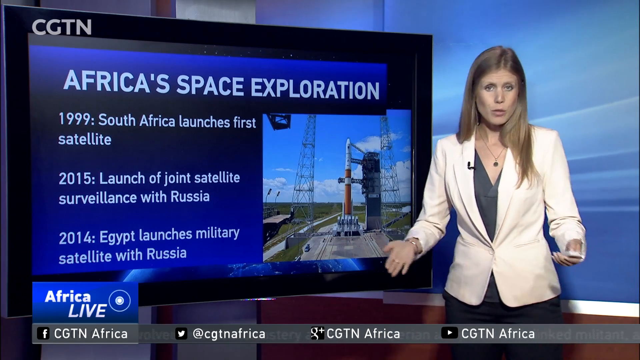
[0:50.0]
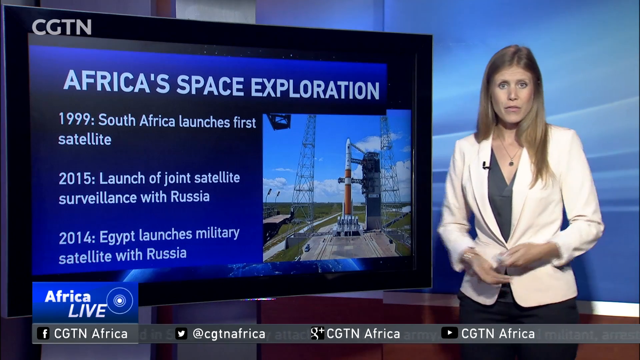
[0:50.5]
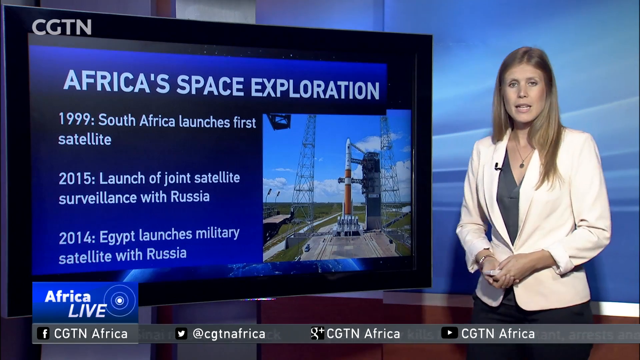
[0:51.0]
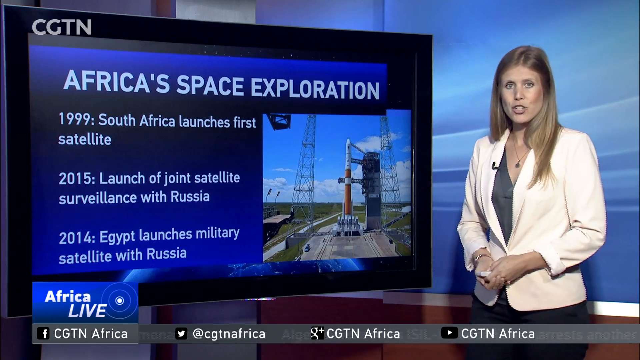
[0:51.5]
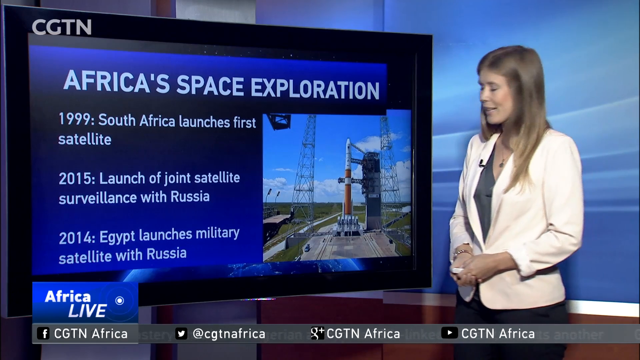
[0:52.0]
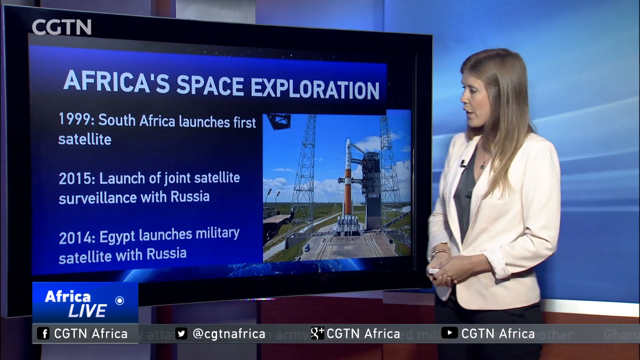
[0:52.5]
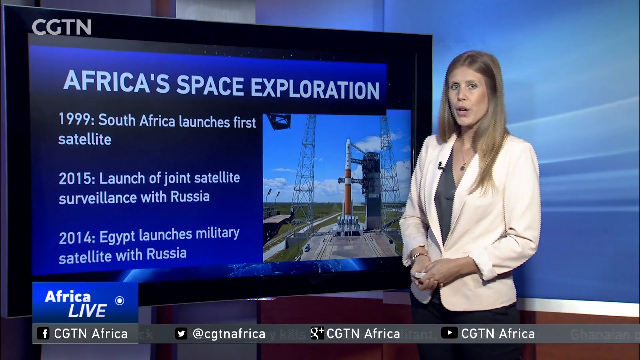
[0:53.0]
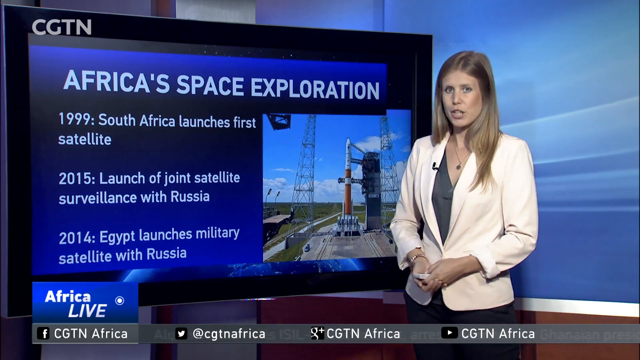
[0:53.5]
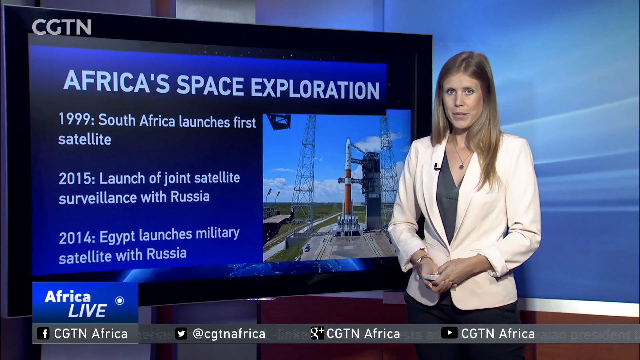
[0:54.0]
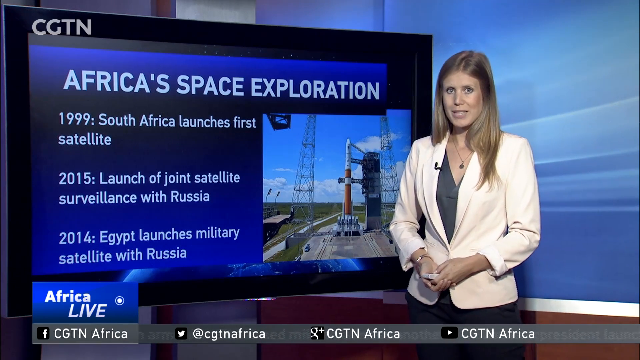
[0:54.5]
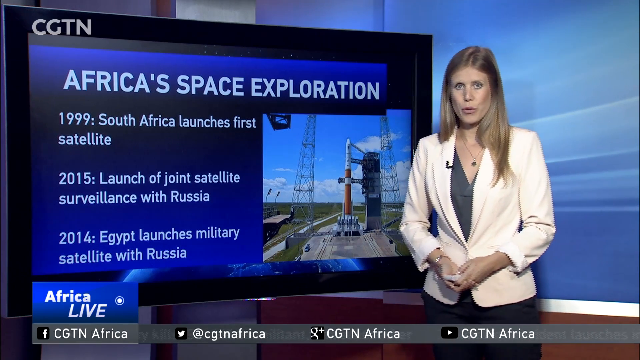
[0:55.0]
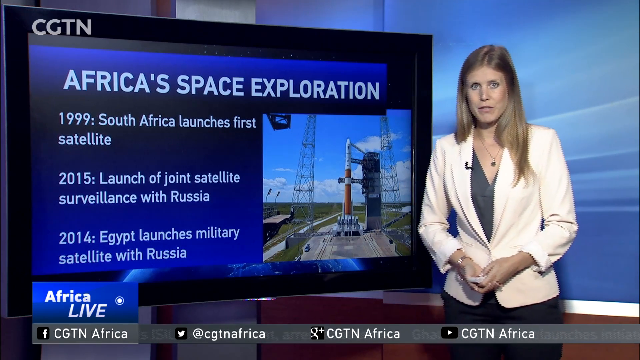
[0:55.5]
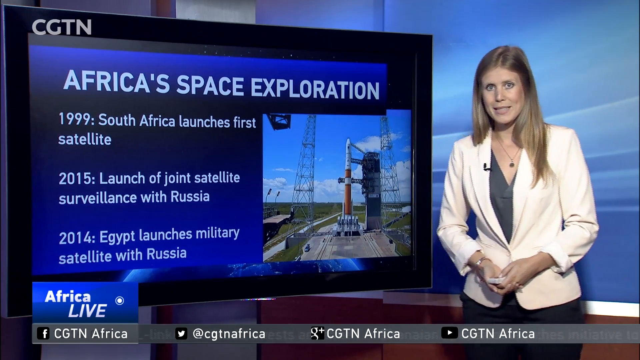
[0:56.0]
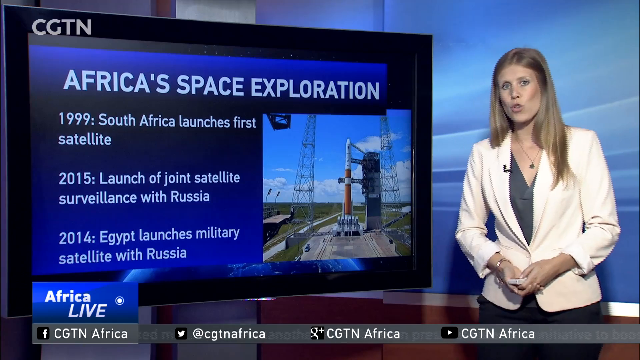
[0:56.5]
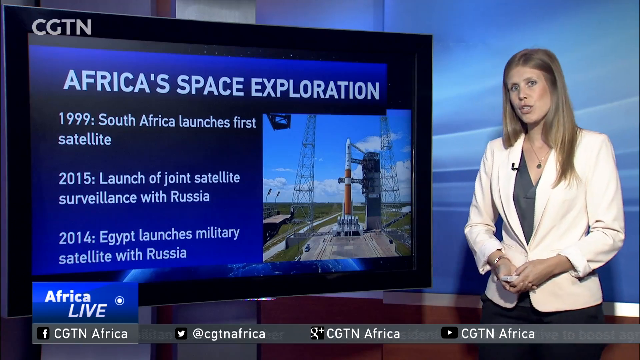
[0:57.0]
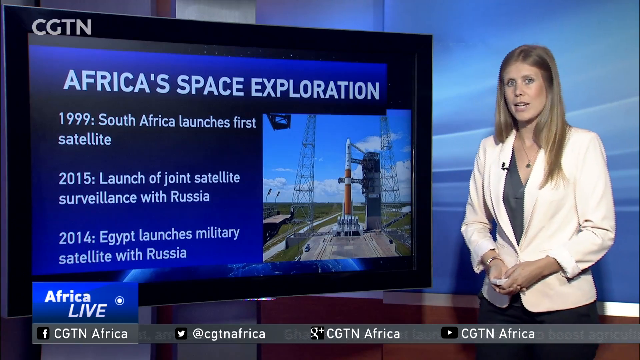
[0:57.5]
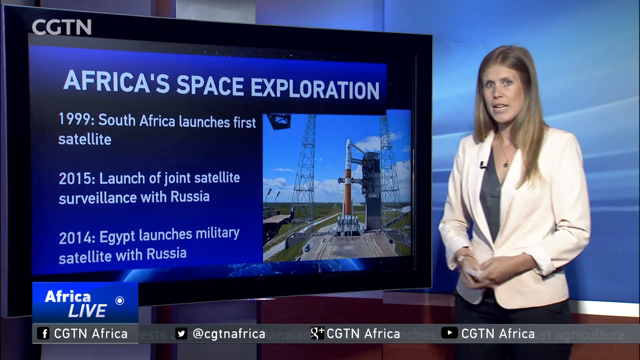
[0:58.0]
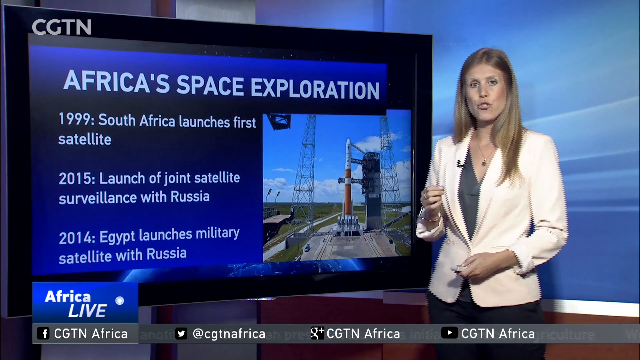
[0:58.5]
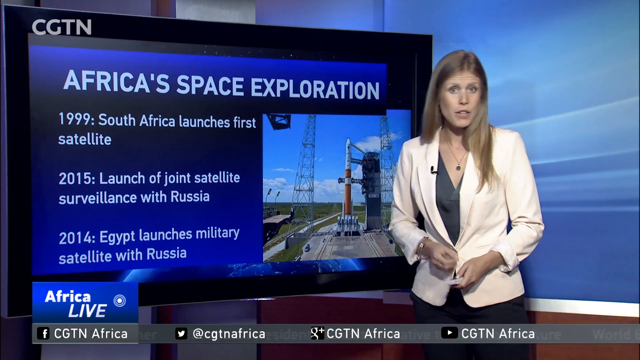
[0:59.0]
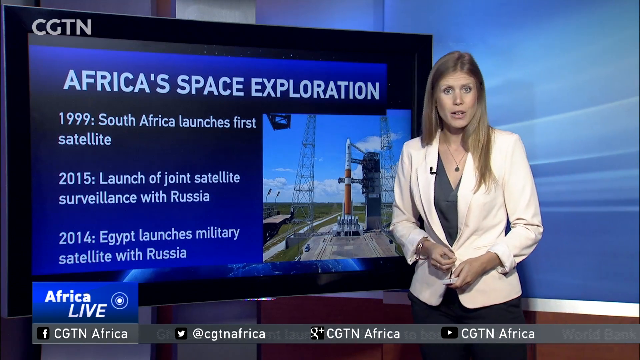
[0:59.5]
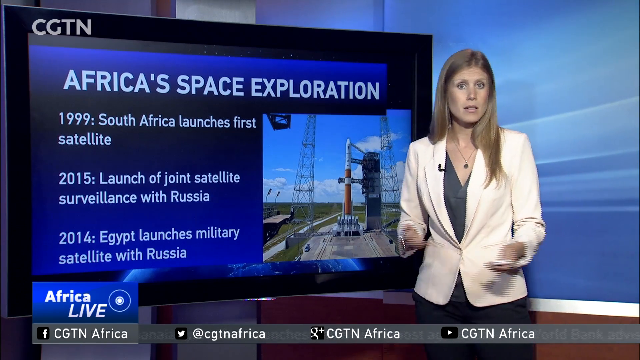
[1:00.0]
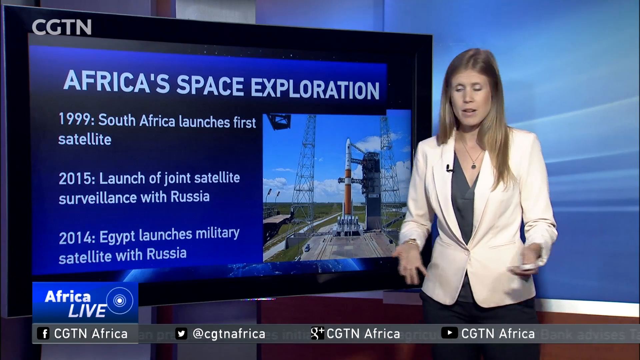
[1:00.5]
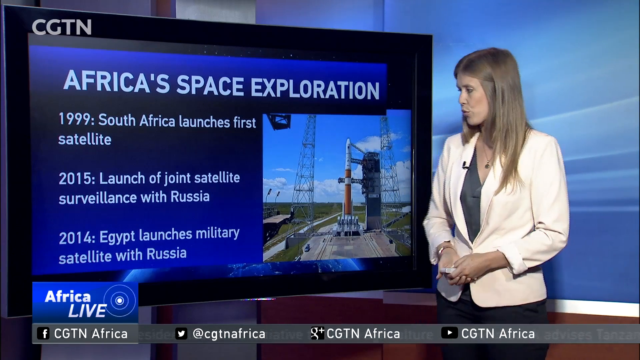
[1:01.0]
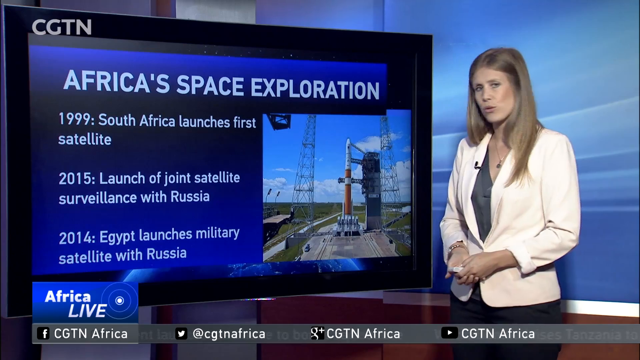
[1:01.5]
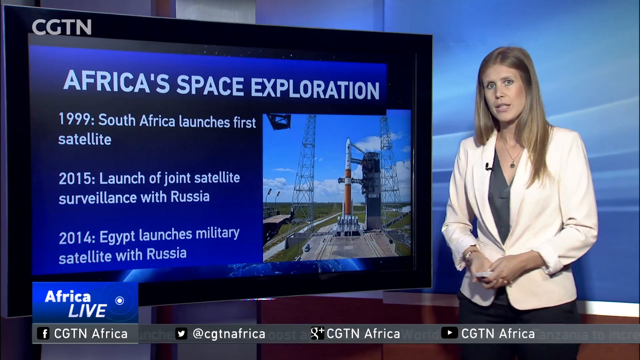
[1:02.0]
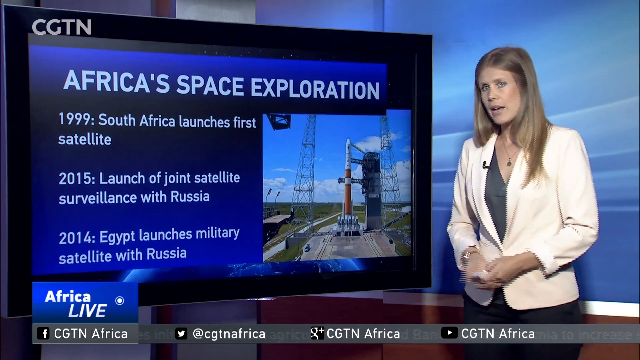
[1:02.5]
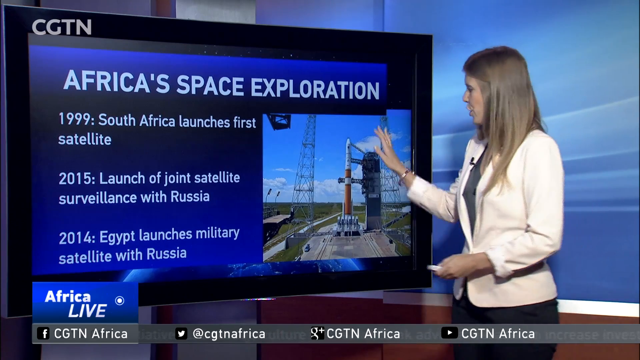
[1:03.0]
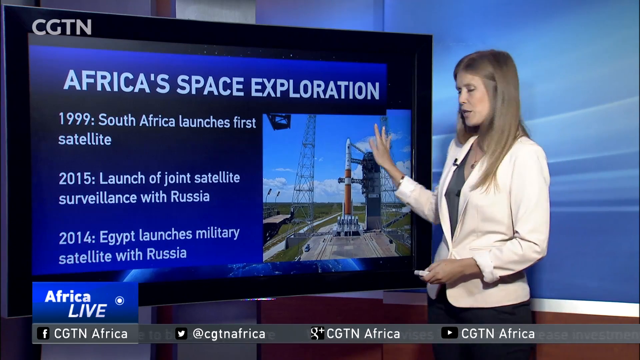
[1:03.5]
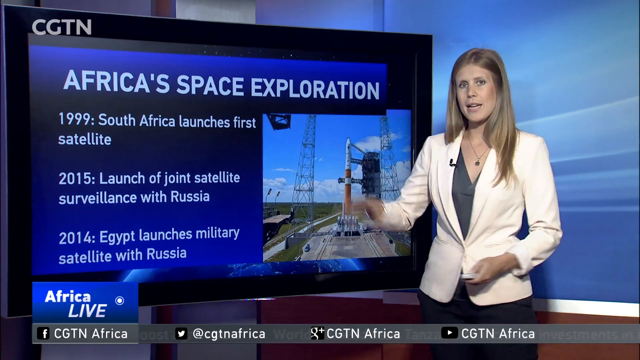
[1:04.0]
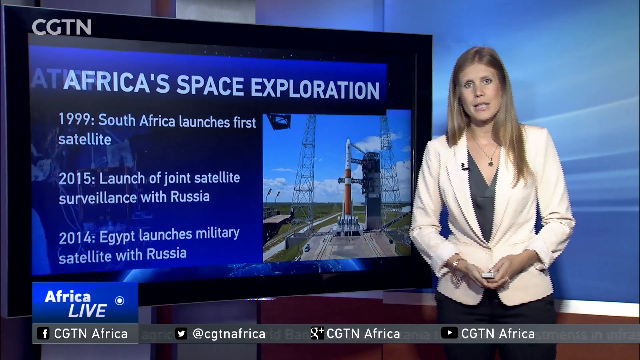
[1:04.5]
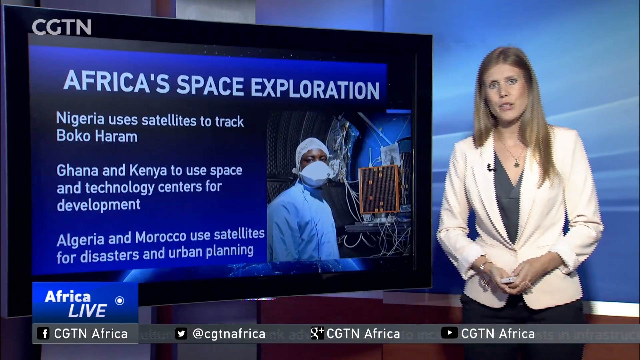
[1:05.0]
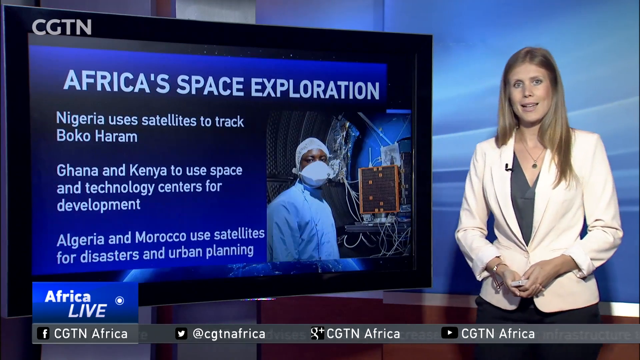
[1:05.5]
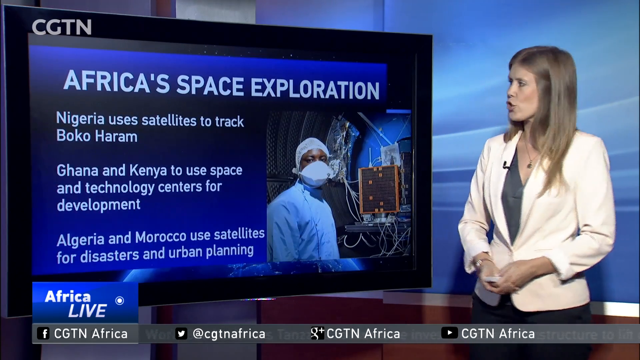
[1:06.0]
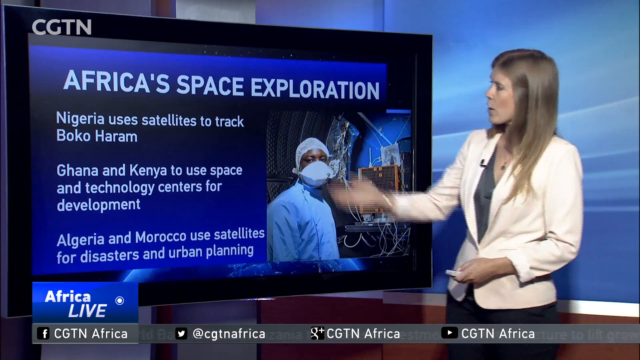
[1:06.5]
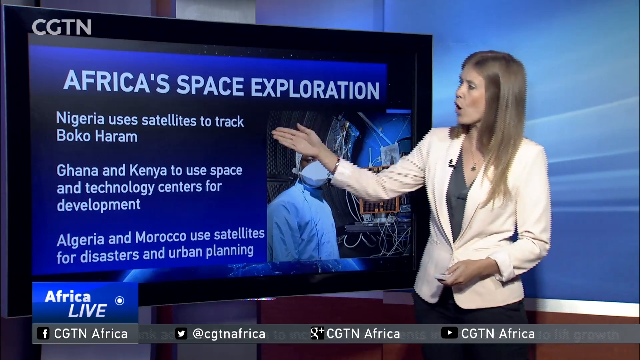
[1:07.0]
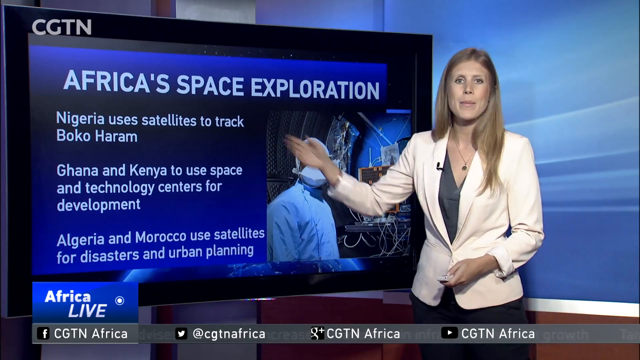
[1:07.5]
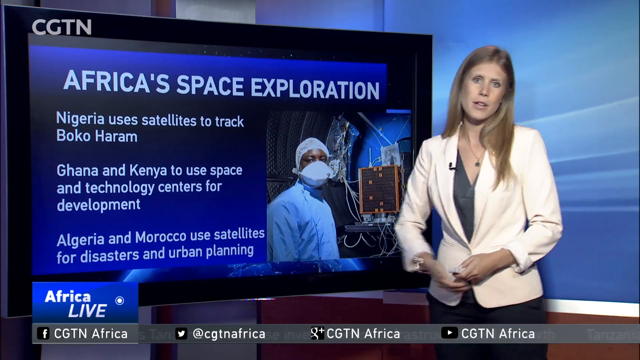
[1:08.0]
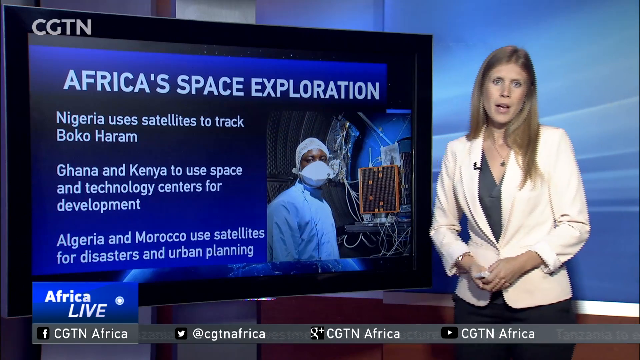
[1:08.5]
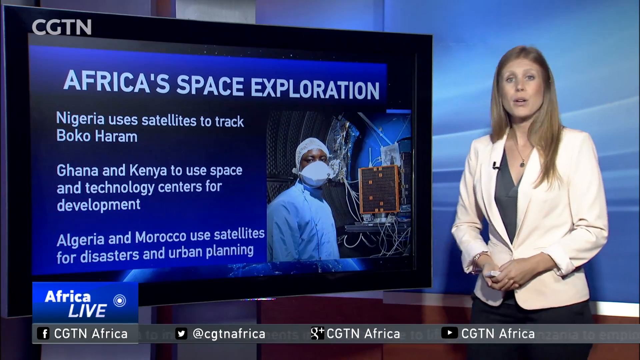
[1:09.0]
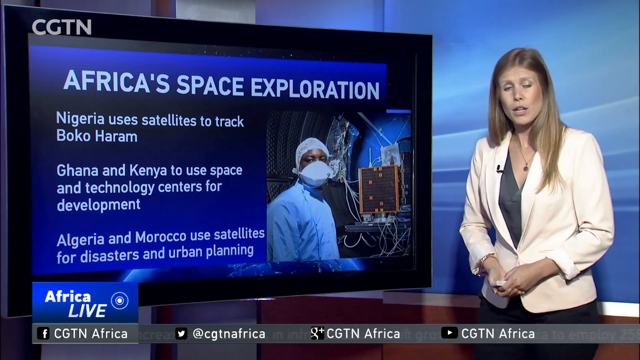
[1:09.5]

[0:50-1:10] The CGTN news segment on African countries' space exploration continues. The screen shows that in 1999 South Africa launched its first satellite, and that in 2014 Egypt launches a military satellite with Russia. The presentation moves on through other countries as she speaks. On one last screen, she talks on the left side of the frame while pointing at the television screen.